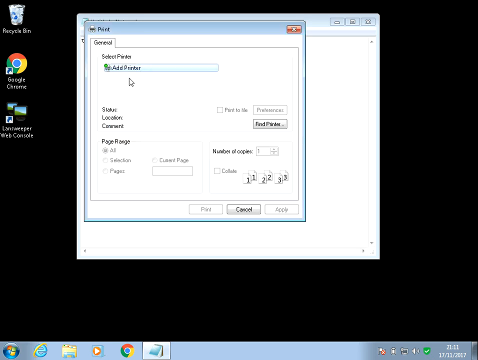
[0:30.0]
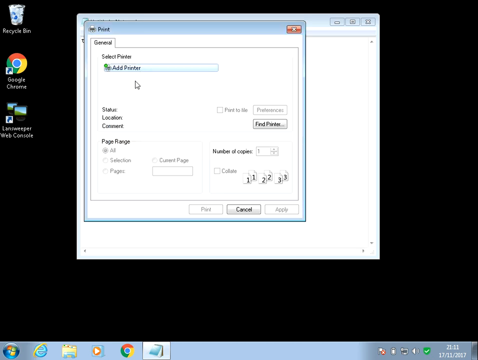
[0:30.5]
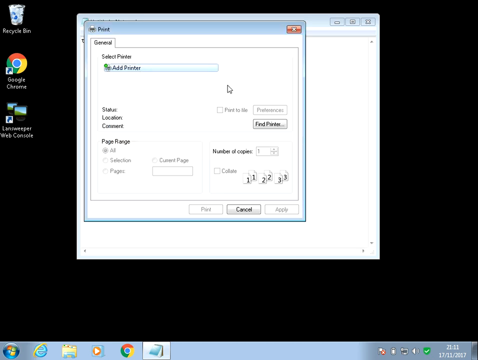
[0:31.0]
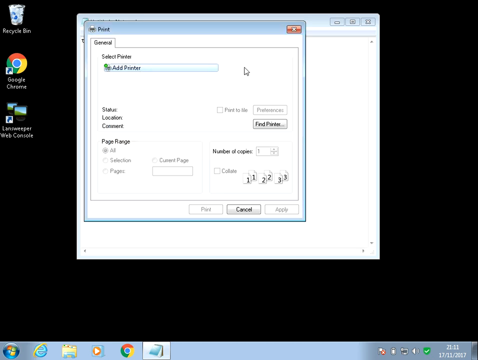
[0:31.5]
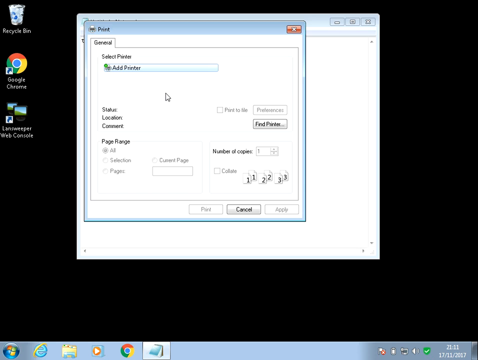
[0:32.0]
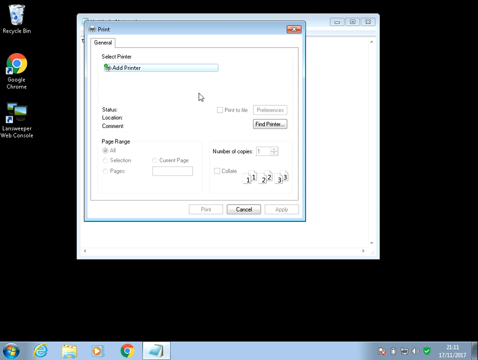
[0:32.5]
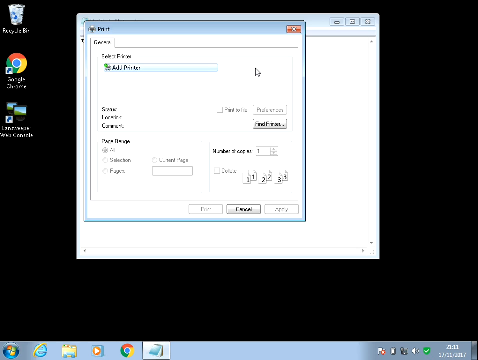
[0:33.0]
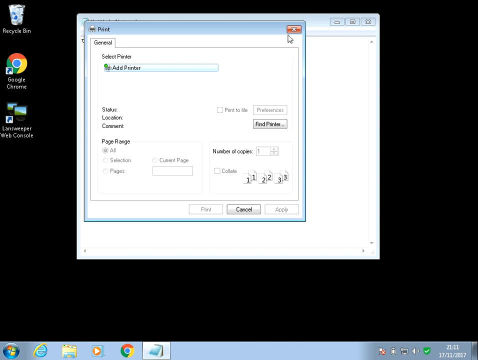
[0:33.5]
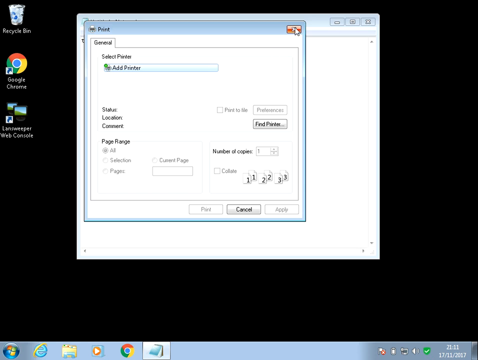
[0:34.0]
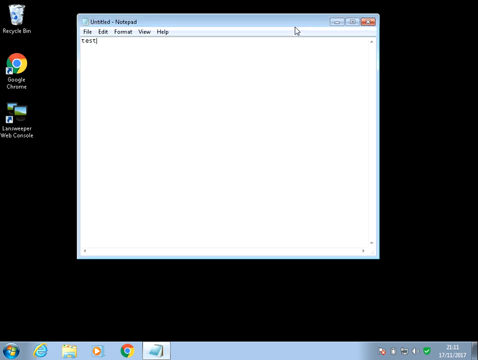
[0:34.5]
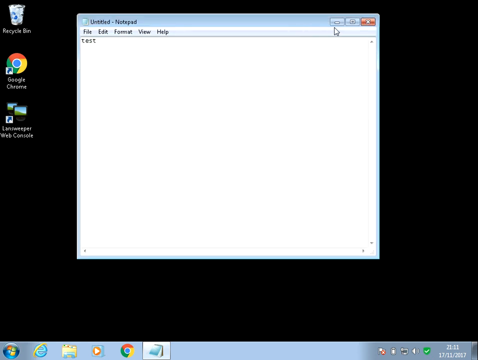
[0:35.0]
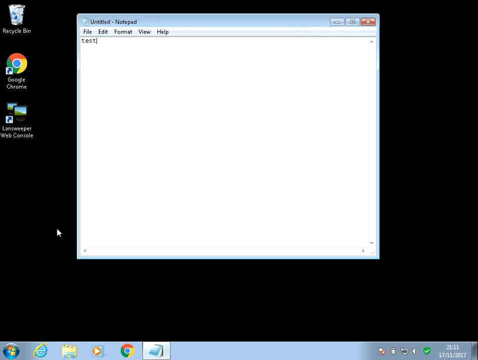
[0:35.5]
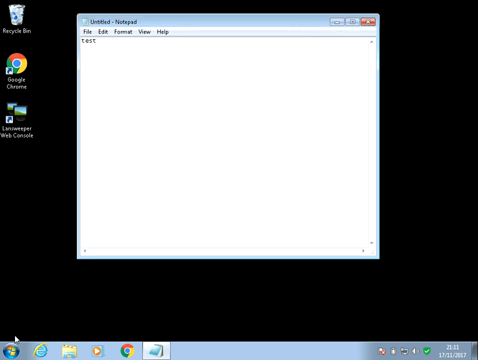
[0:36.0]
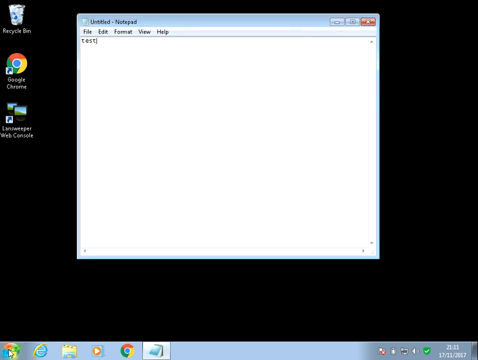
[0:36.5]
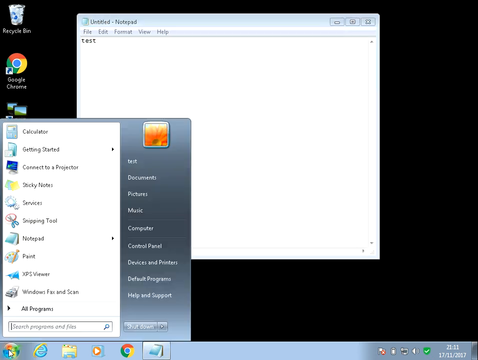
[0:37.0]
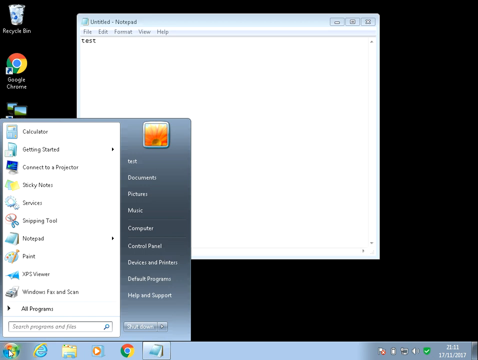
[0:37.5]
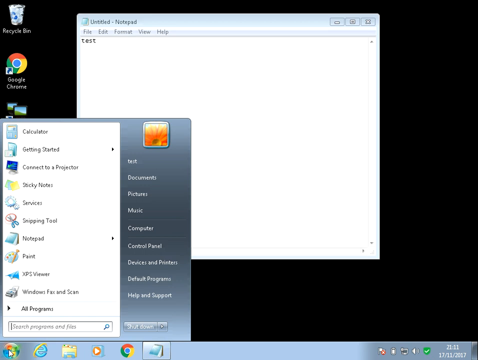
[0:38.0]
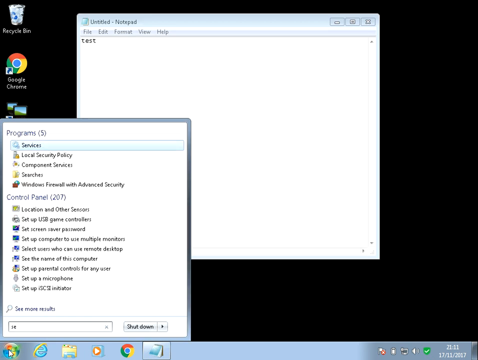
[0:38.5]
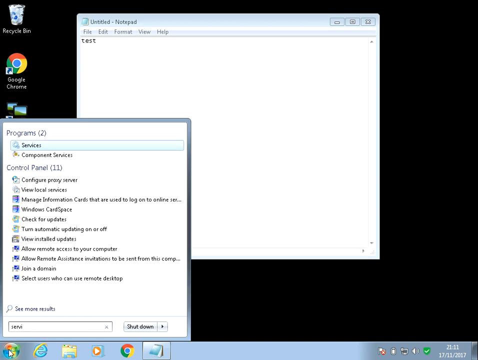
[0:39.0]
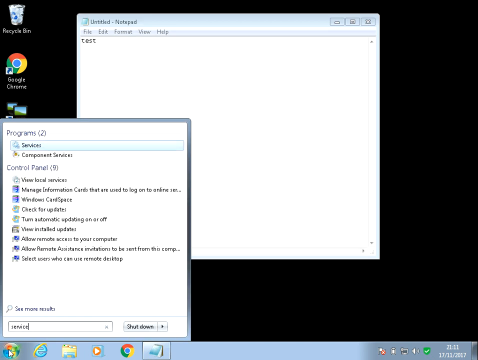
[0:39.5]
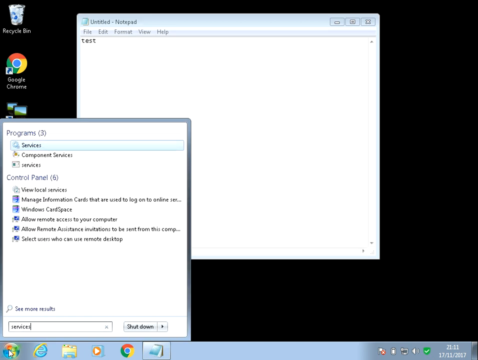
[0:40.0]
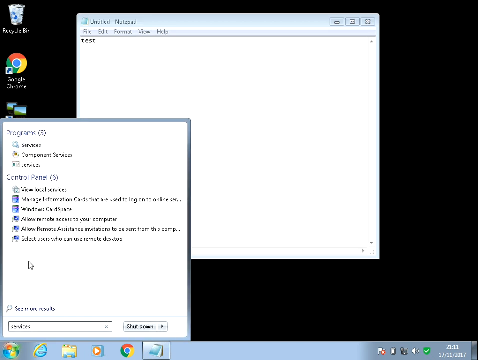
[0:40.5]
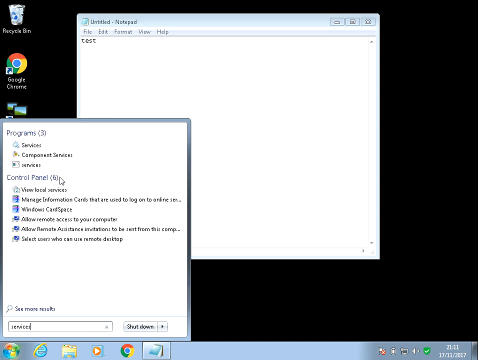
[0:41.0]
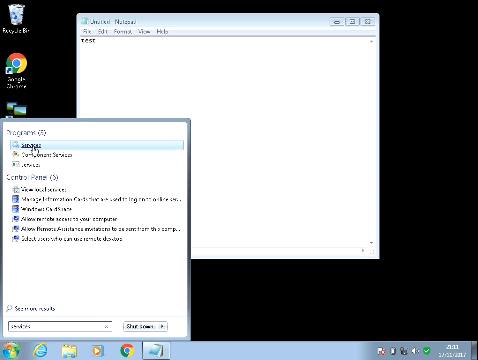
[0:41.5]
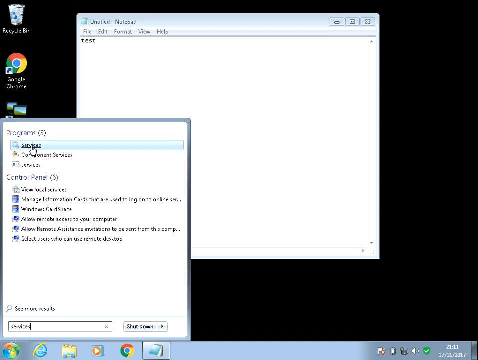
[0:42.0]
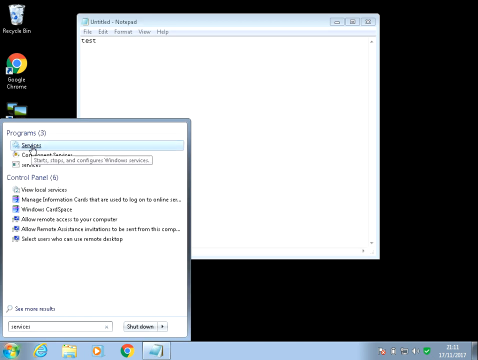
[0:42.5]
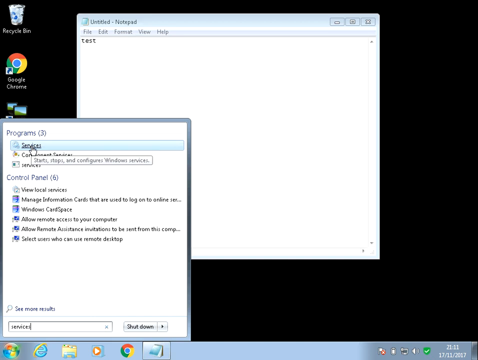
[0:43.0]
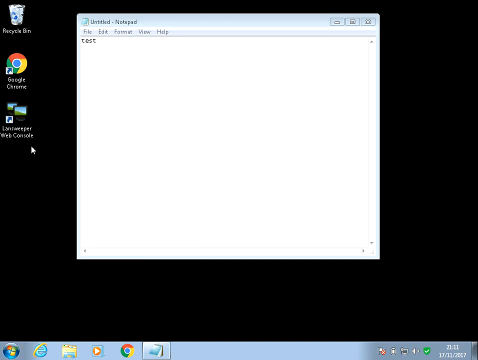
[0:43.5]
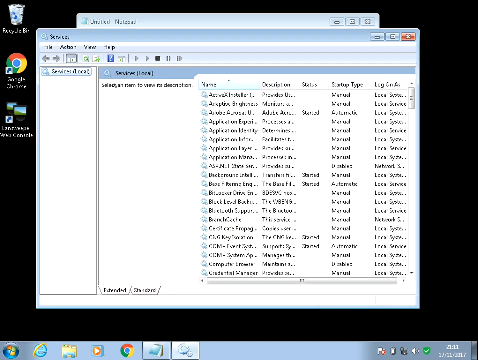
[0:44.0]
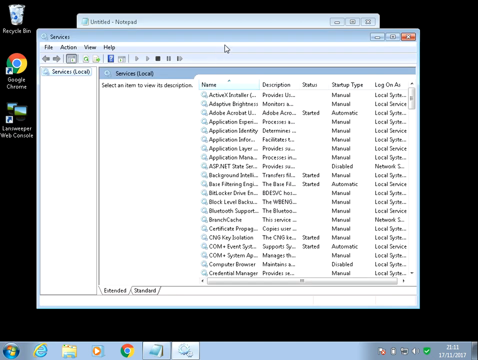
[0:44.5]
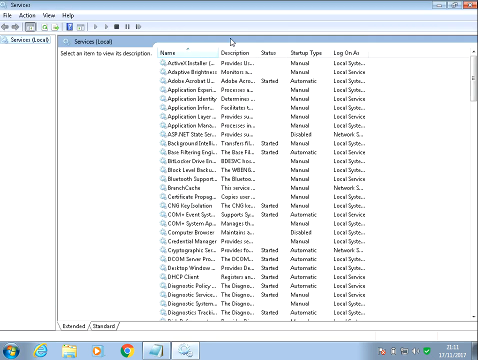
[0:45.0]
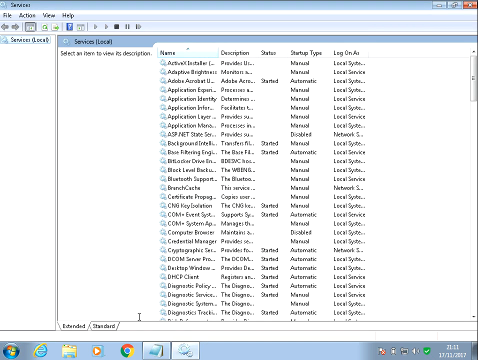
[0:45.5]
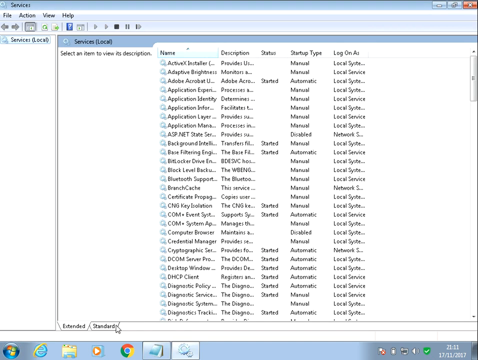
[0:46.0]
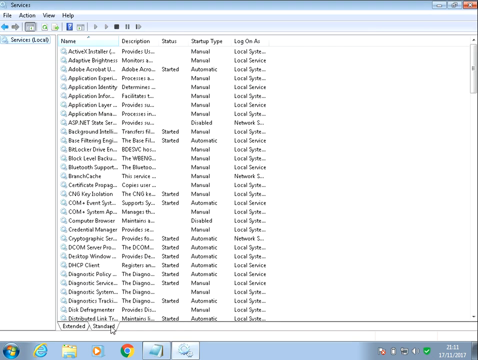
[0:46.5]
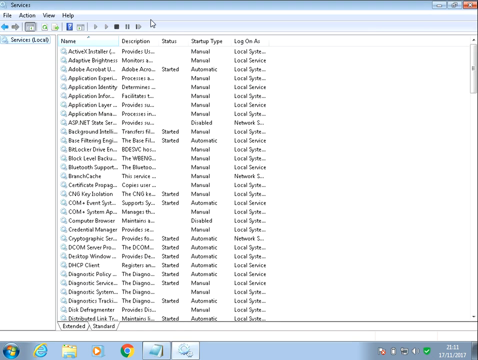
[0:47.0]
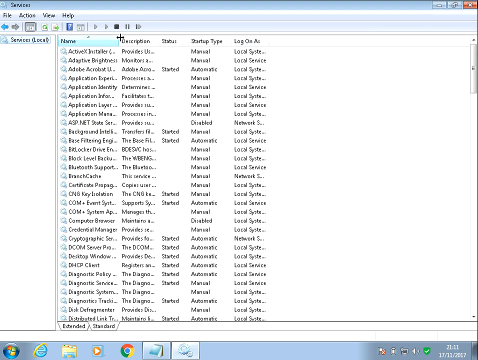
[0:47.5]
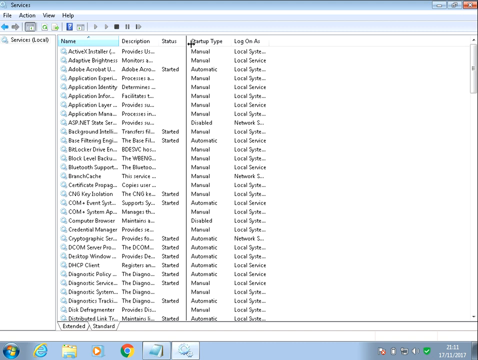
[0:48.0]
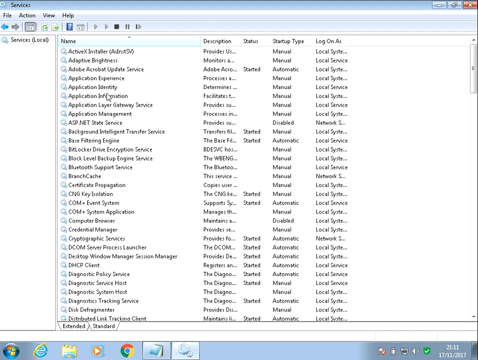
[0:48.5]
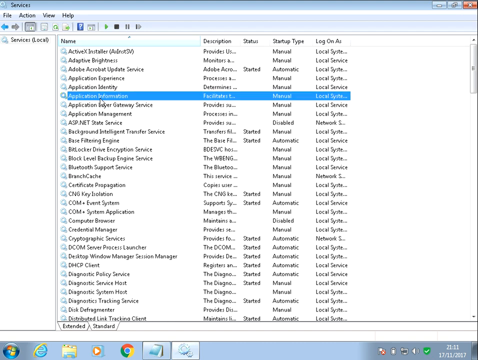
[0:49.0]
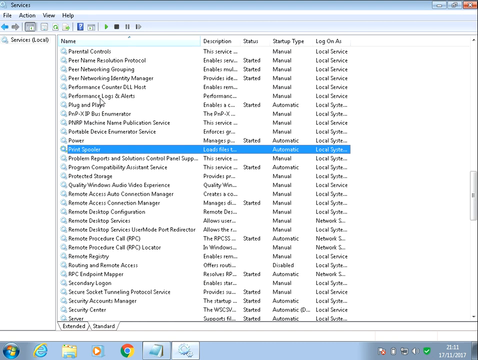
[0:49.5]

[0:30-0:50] The frame may be slightly wider than it is tall. Someone's desktop is shown with a generally black background and three icons in a column along the left-hand side: Recycle Bin, Google Chrome, and a third whose label cannot be read. The print window is open in the center, just left, near the top. It is on the General tab, and below that it says "select printer", with an option to add a printer that seems to be highlighted. The user moves the mouse right, then left, then goes up and X's out of the window. He clicks on Windows, goes under Services, highlights Services and clicks it. He expands the window to take up the whole area, and in the Services menu he expands the Name column to be very wide and selects the print spooler. The window lists many other items, such as ActiveX and Adobe Acrobat.